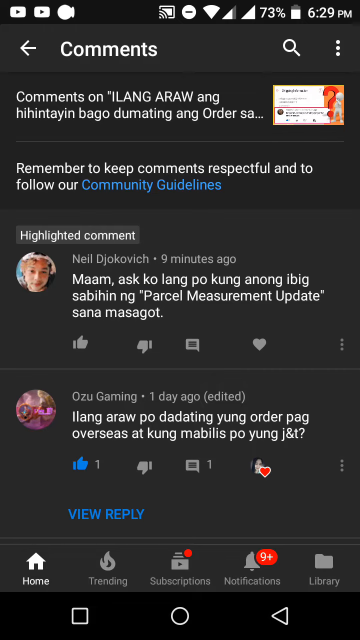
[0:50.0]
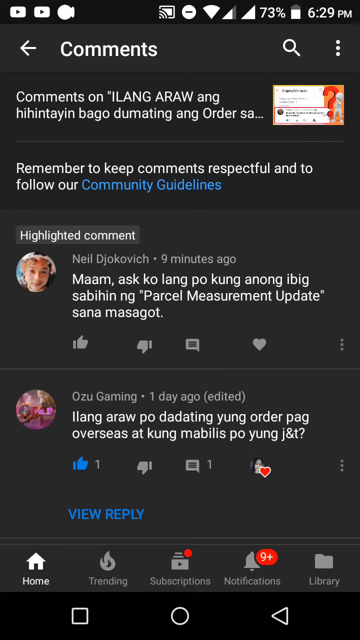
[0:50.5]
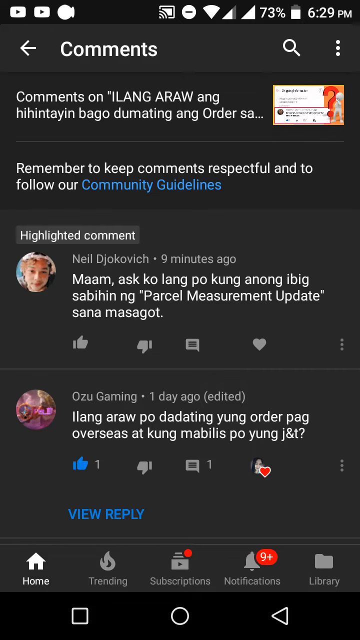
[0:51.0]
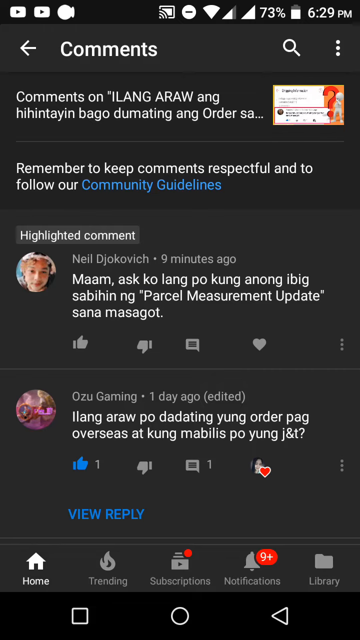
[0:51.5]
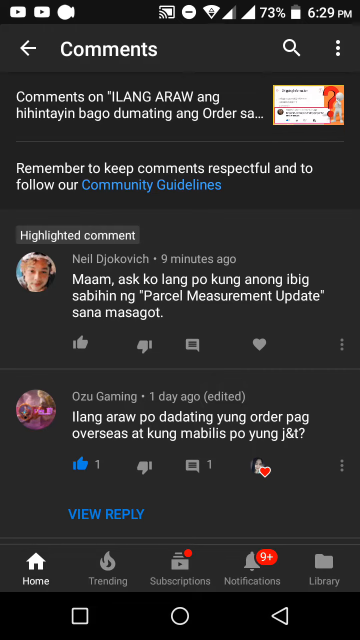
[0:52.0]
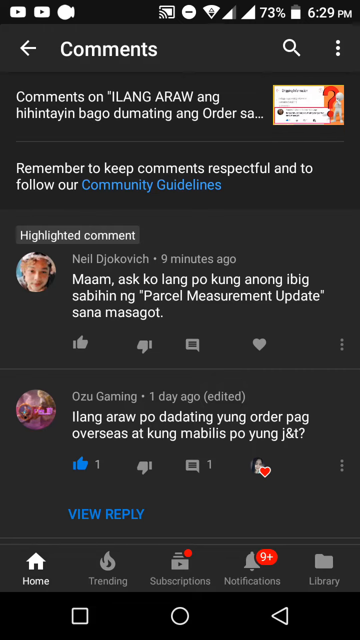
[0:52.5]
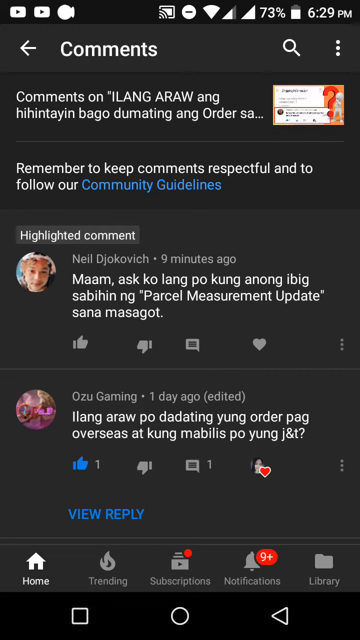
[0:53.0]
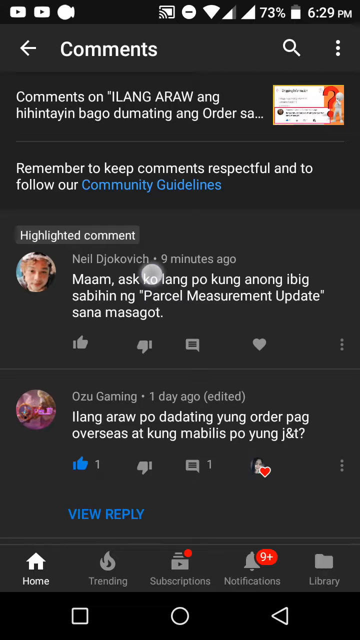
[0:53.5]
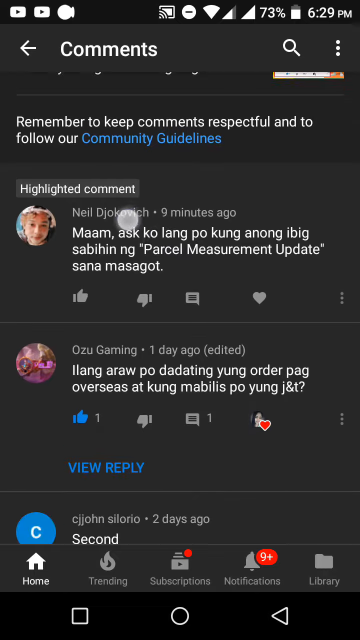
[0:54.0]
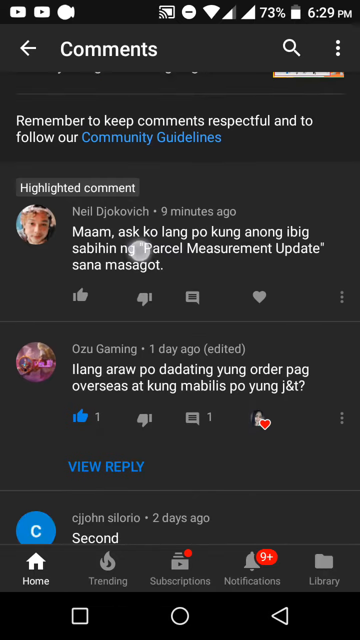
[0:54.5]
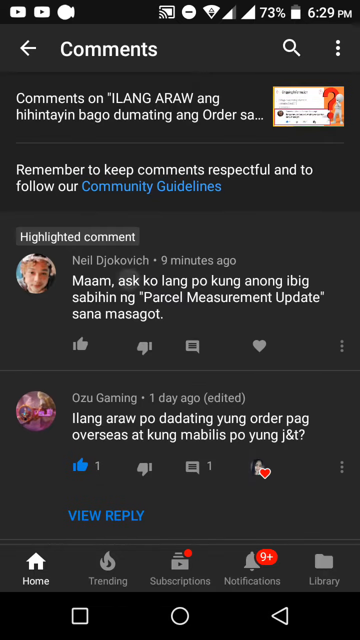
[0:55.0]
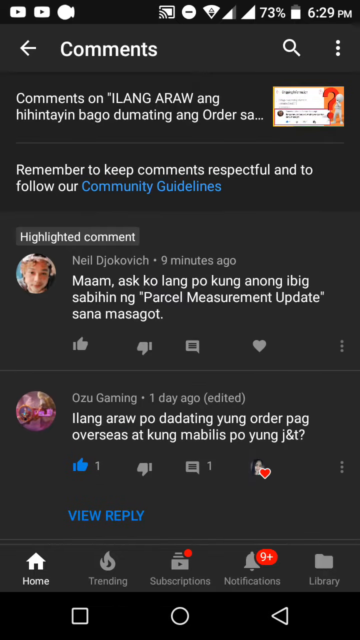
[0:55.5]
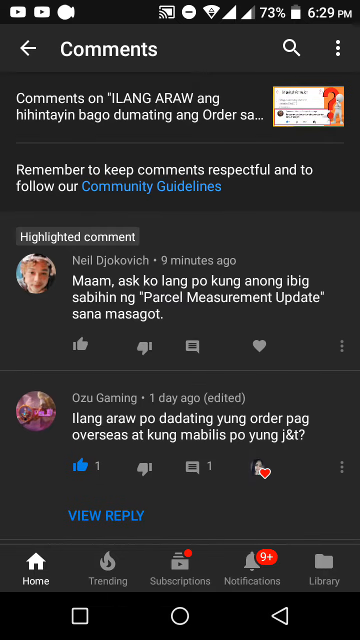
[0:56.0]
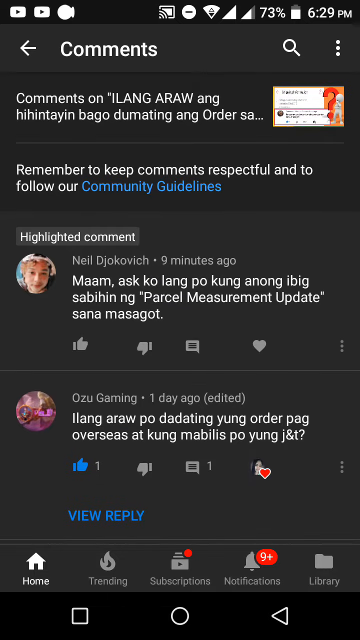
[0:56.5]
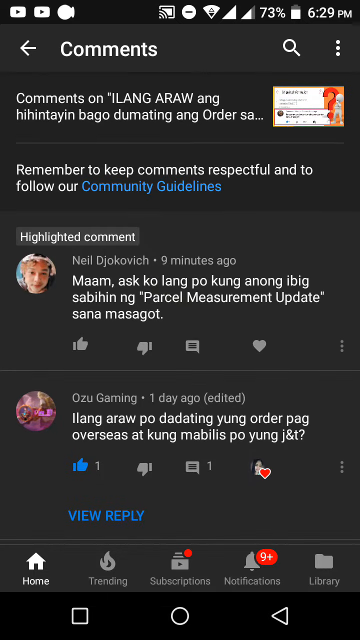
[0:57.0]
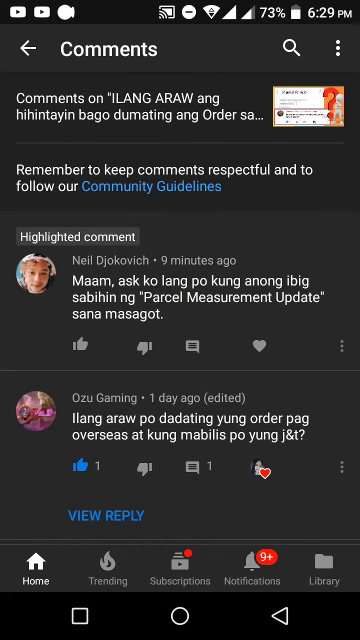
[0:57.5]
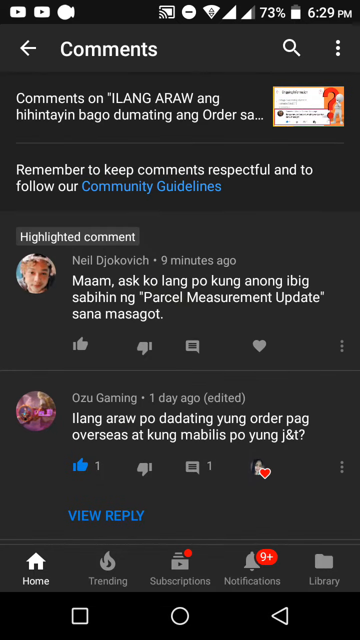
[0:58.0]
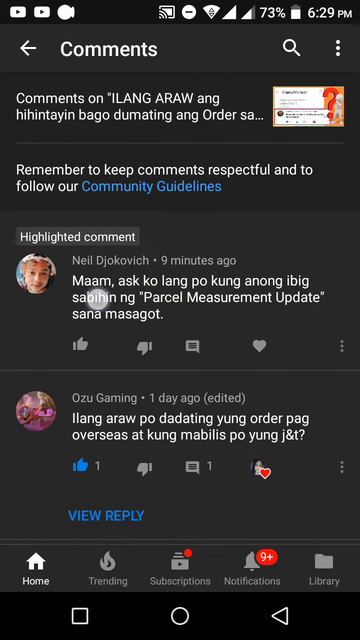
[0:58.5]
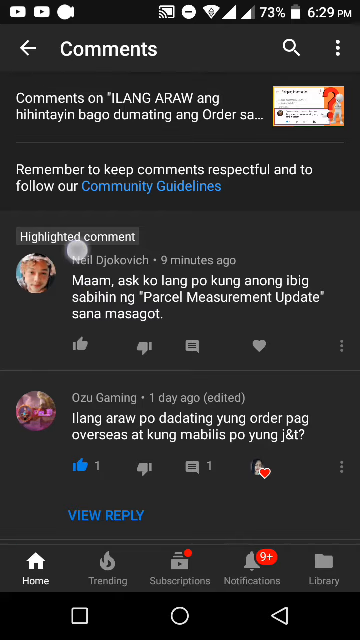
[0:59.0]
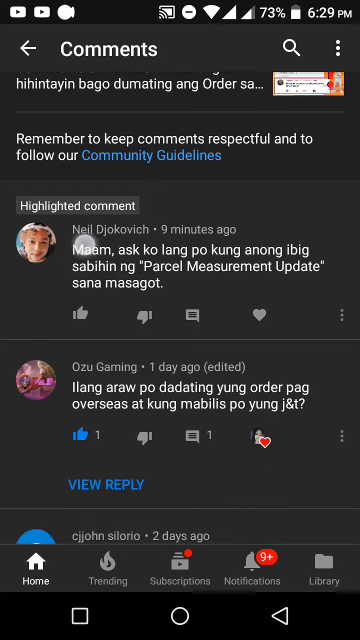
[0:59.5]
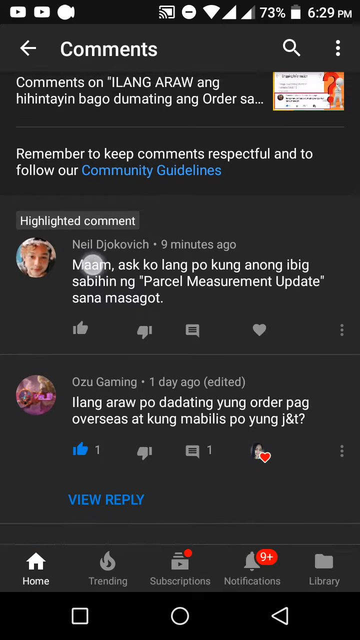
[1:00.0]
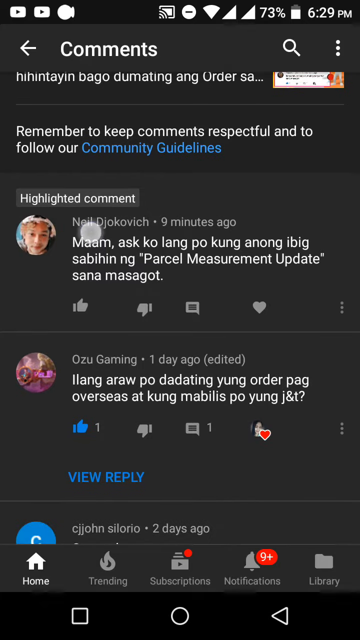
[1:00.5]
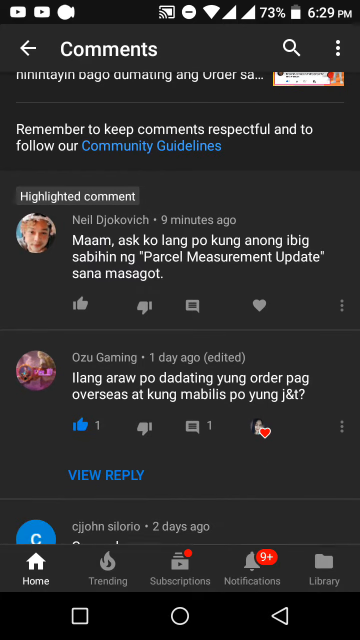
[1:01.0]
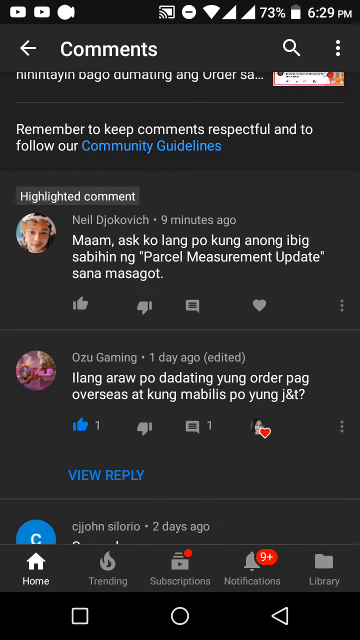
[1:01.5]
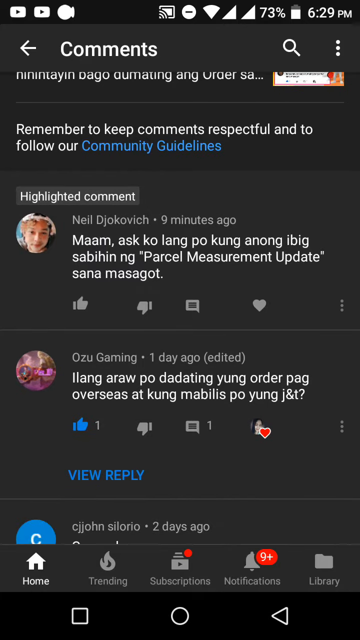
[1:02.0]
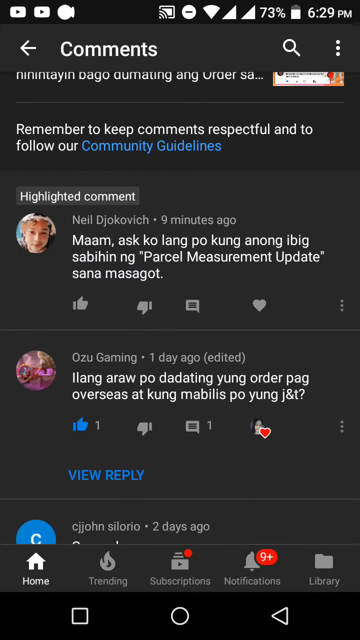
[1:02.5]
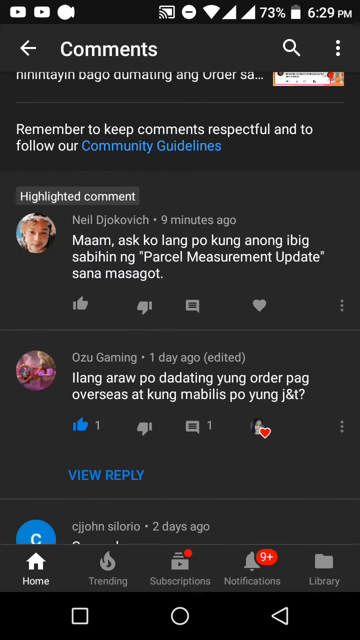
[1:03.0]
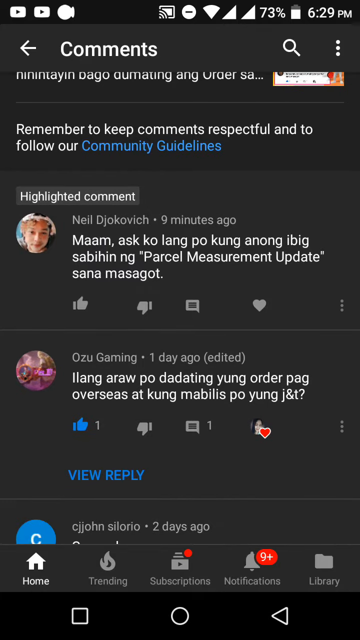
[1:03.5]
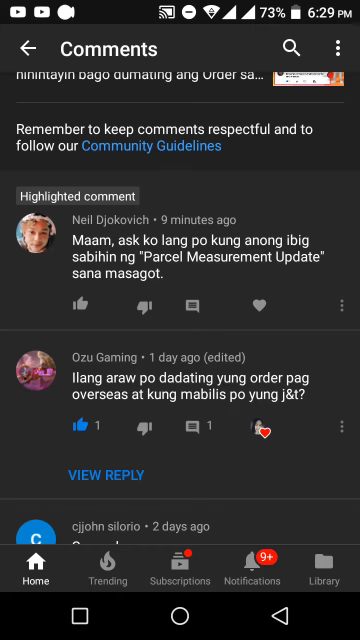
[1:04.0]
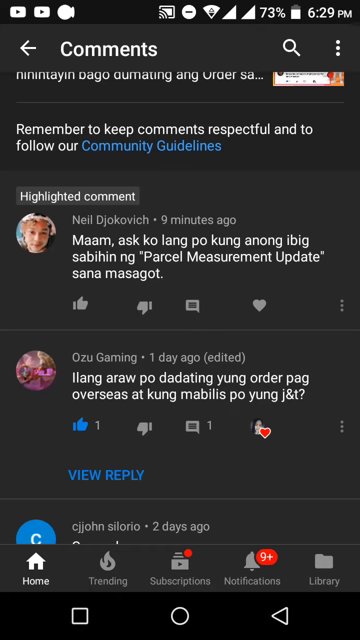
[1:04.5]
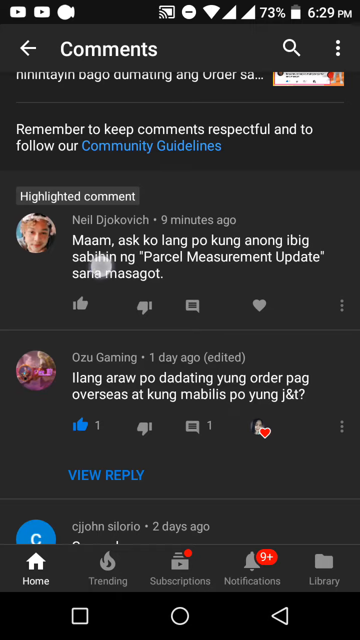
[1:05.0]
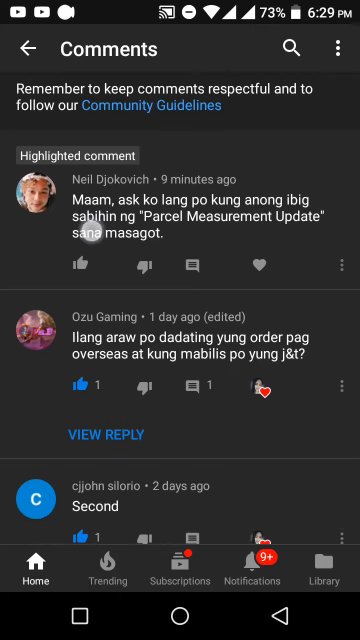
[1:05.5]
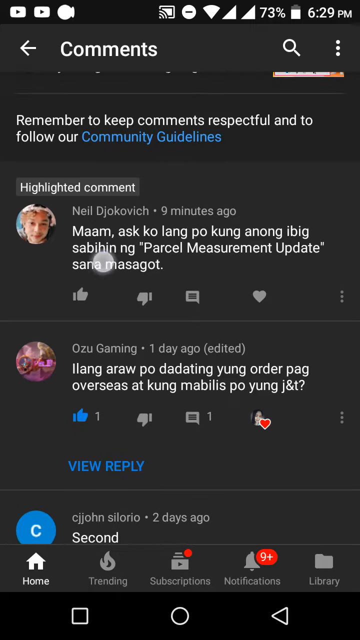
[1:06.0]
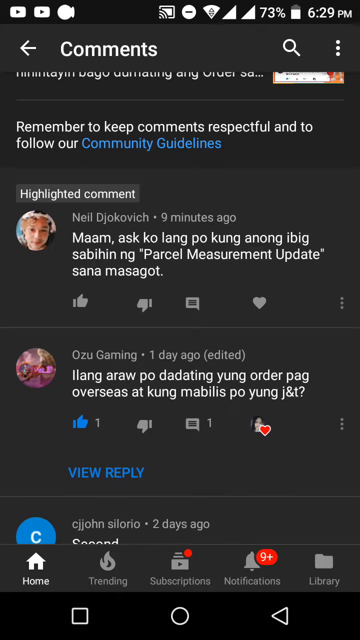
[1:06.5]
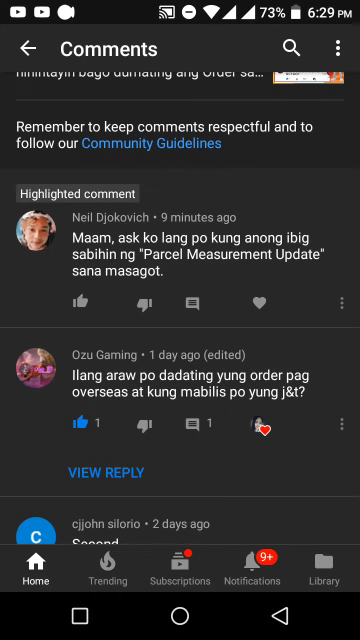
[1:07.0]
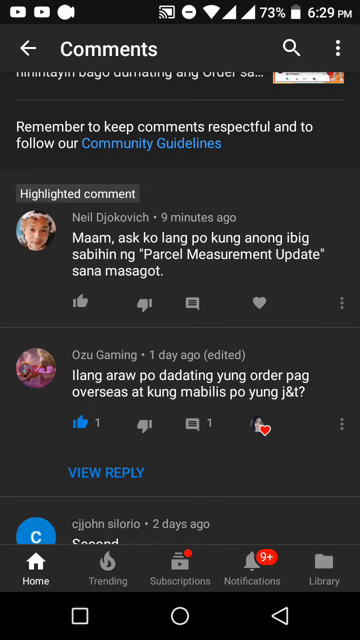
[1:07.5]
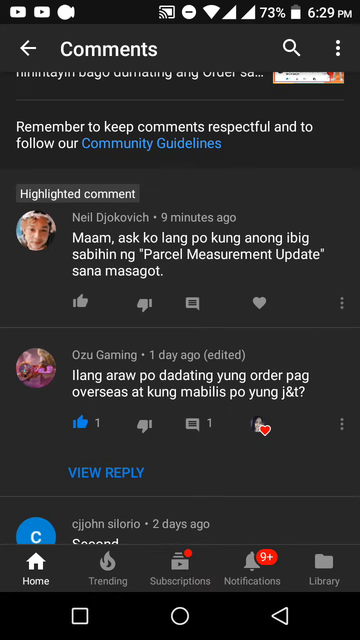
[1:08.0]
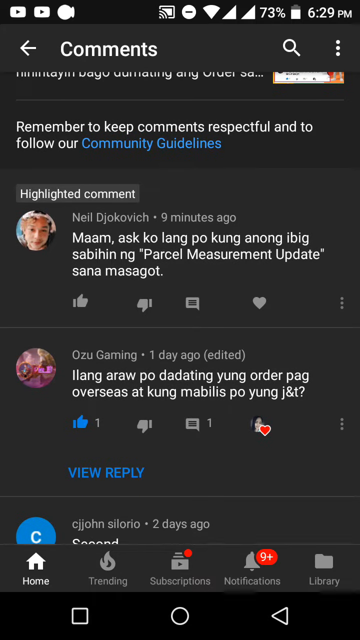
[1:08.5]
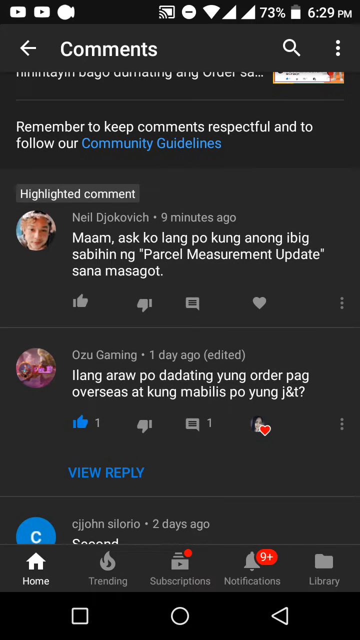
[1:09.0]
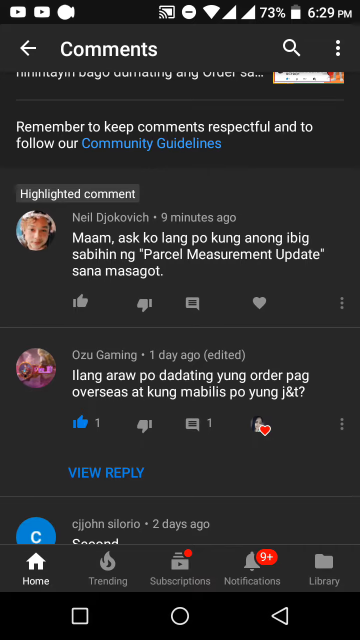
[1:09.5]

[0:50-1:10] A dark gray mobile device screen shows the comments page, with text written in white. At the top of the page, "comments" is written in large white text. There are two comments. The highlighted comment is from a person named Neil Djokovic from nine minutes ago, written in a foreign language. Below it is a second comment from Ozu Gaming, posted one day ago and edited, also in a foreign language. Below that, "view reply" is written in blue text. A round white cursor, like a mouse cursor, moves the comments slightly up and down, while the comments stay on the screen. The second comment from Ozu Gaming has a love icon, a red heart, and one thumbs up in blue.